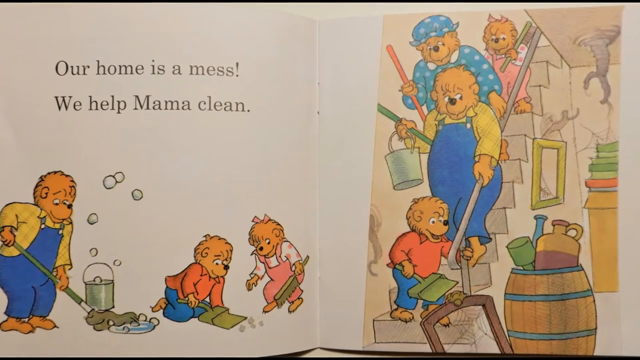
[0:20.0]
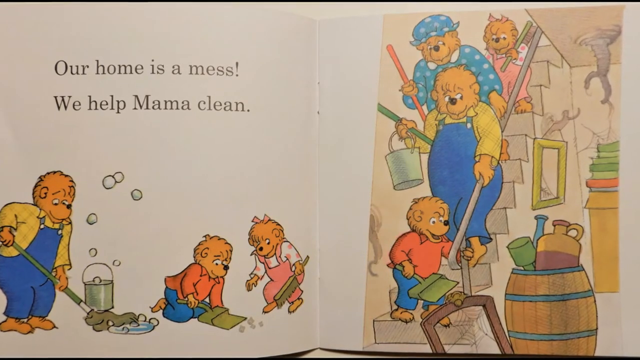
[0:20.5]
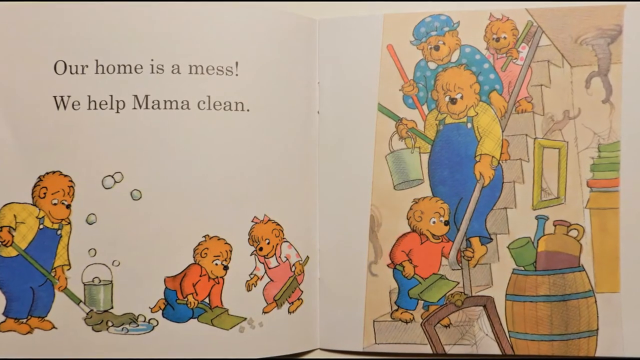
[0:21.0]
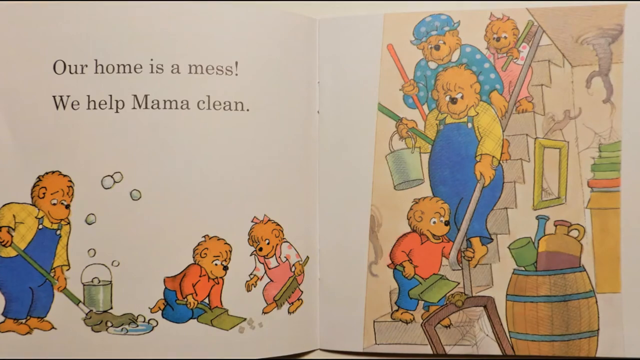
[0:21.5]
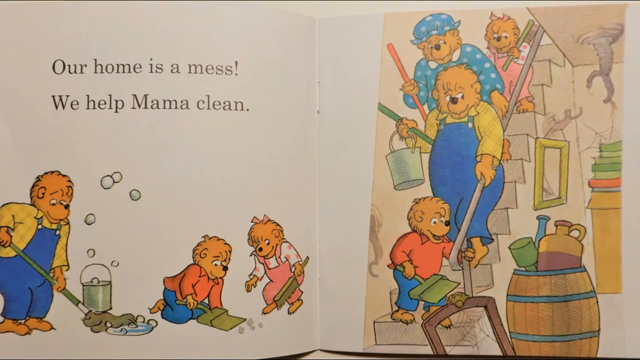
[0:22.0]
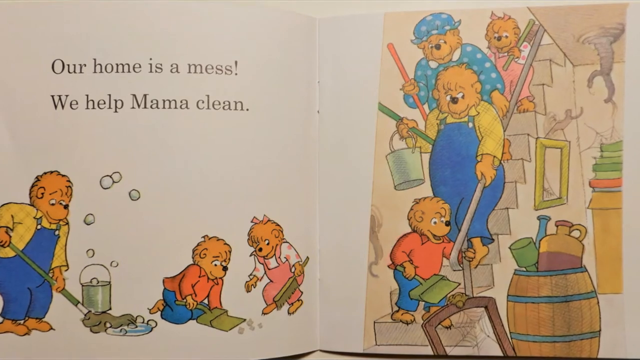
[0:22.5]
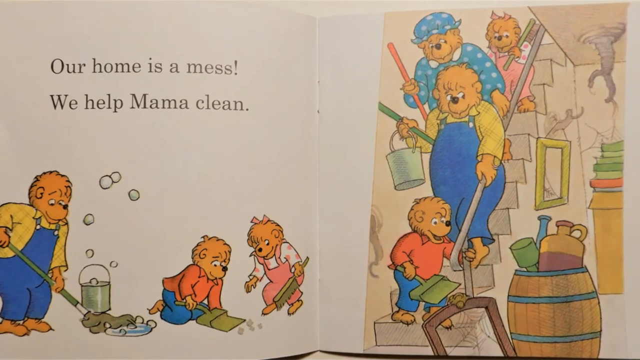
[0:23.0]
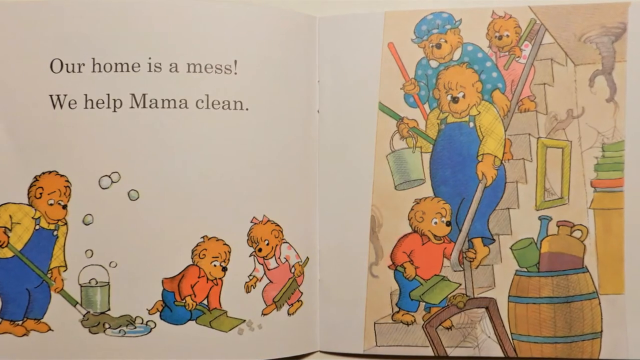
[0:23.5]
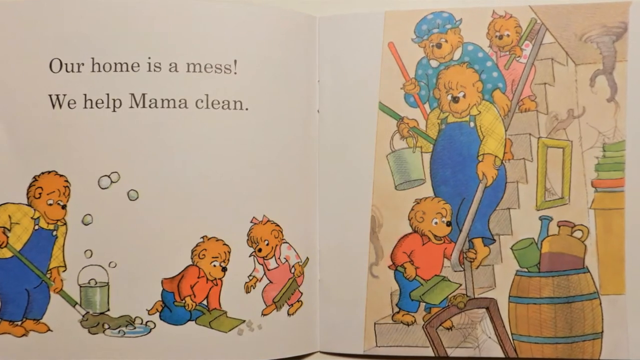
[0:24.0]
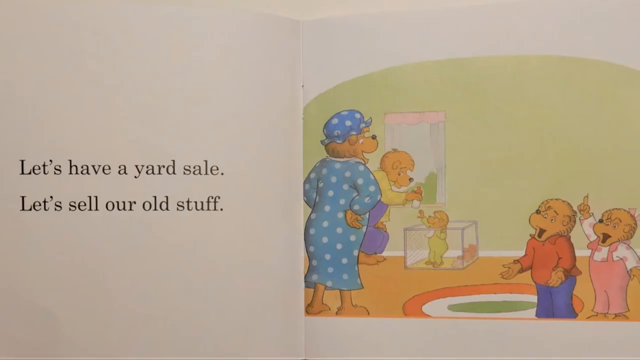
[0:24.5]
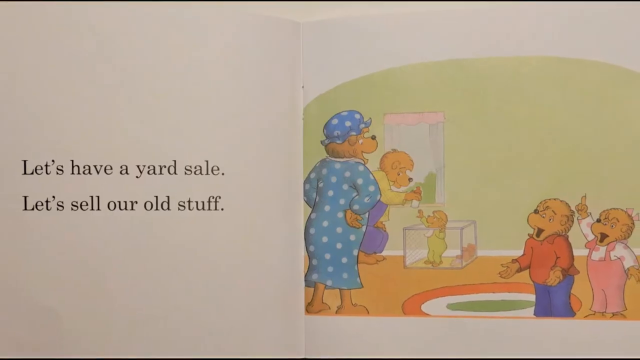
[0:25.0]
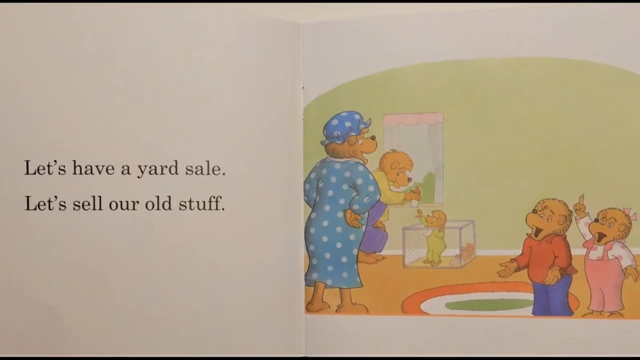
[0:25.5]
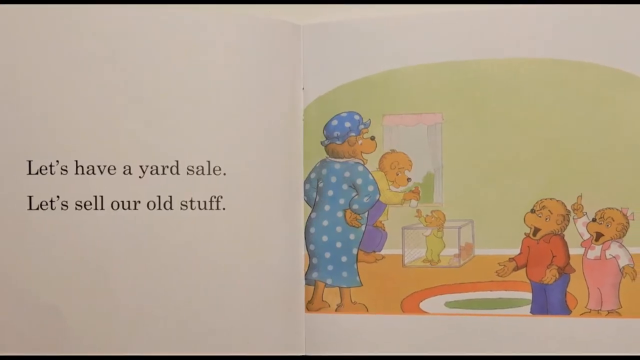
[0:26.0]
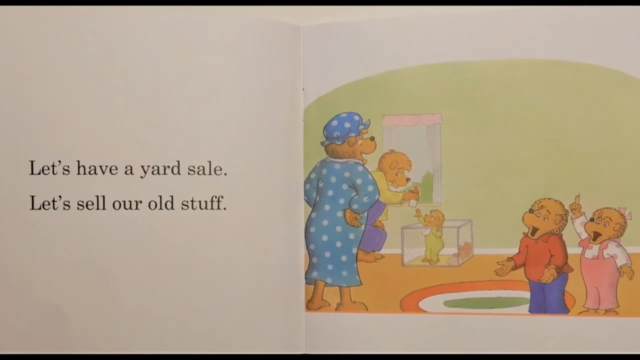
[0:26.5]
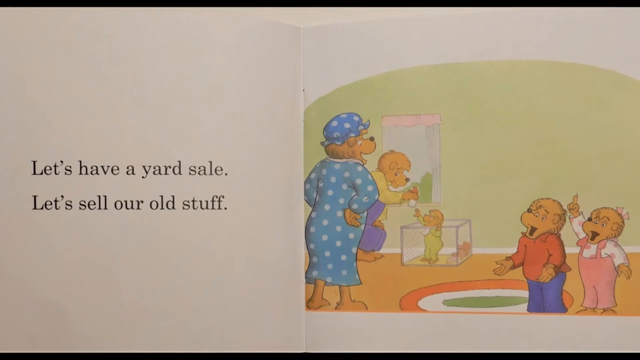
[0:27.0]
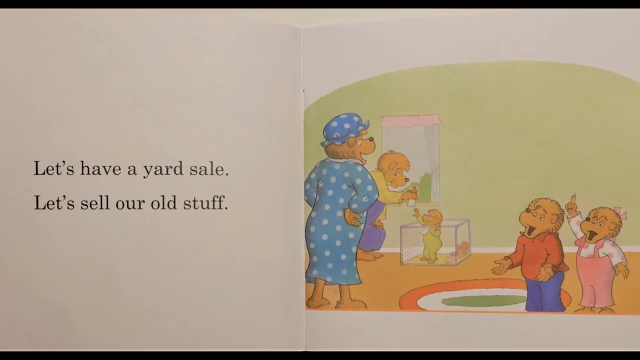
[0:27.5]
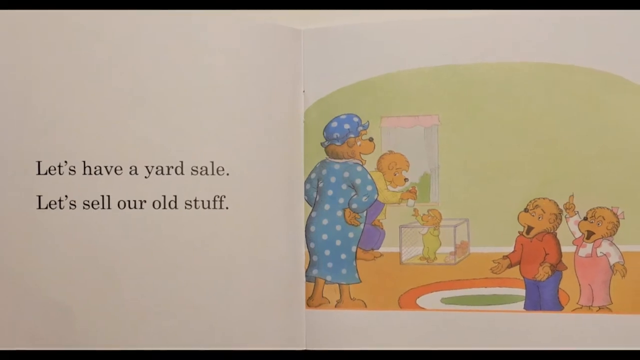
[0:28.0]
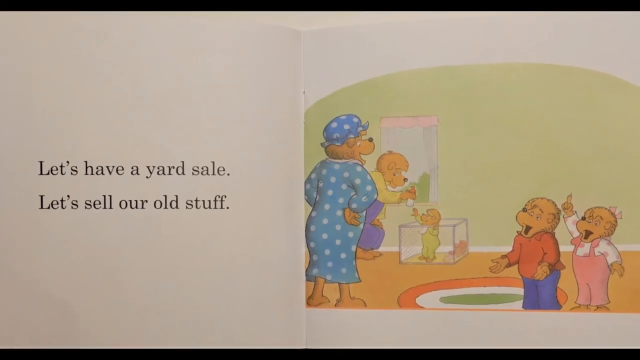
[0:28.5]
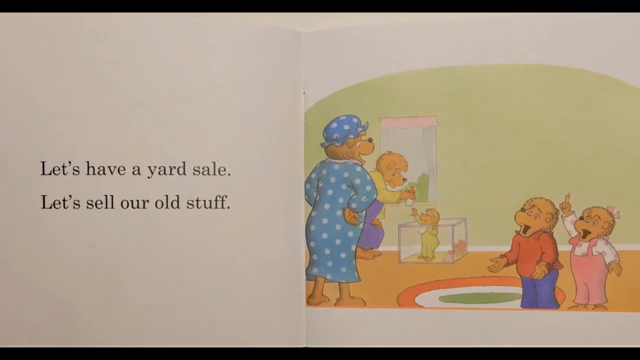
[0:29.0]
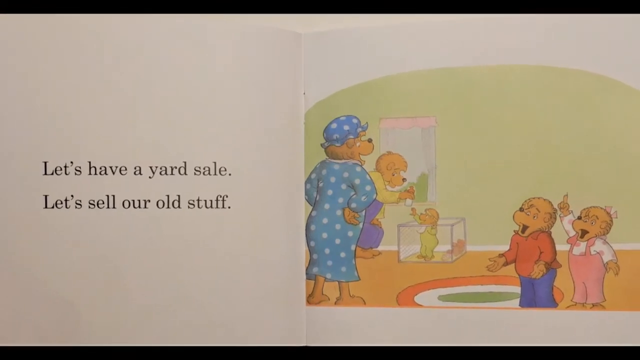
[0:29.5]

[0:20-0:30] The same two pages remain on screen as the camera slowly zooms in. About halfway through, the view switches to another page. There is some text on the left against a white background, and on the right the family is inside their living room, which looks rather empty. There is only a carpet and a fish tank with no fish in it. The baby is in the fish tank, reaching for its dad, who has the bottle of milk. The mother, the daughter and the son are also in the living room. The camera slowly zooms out toward the end.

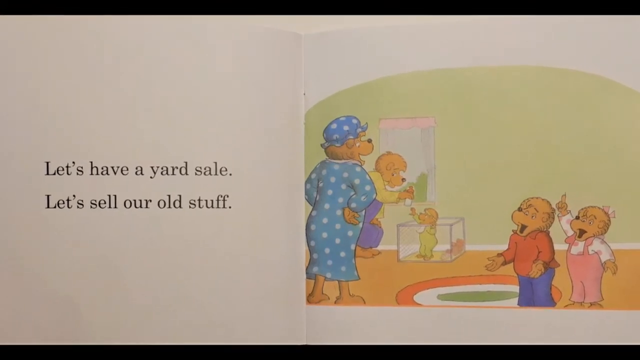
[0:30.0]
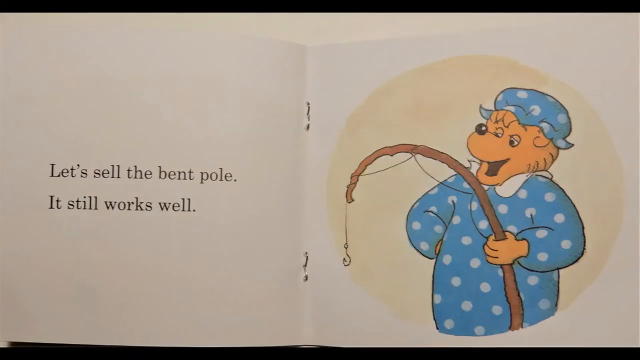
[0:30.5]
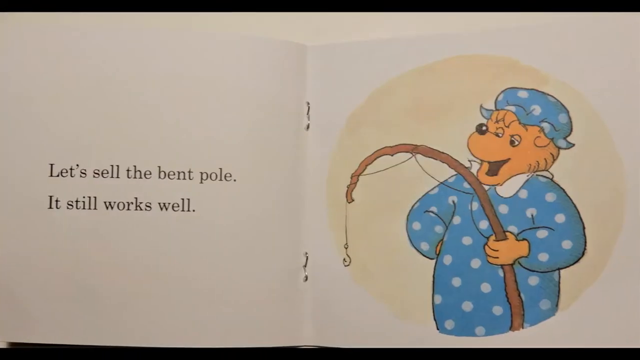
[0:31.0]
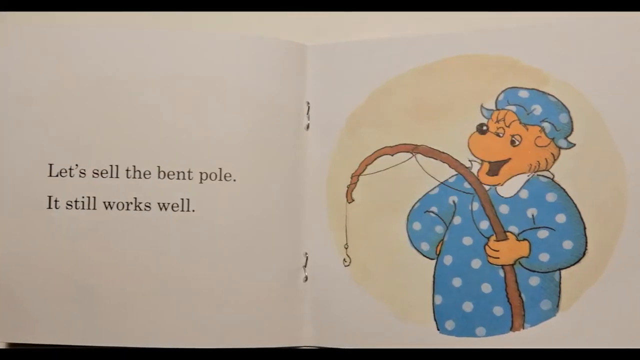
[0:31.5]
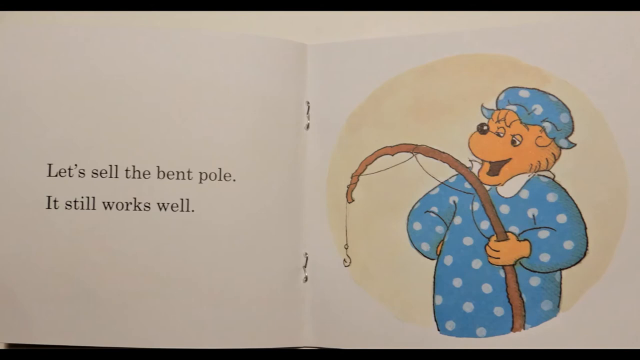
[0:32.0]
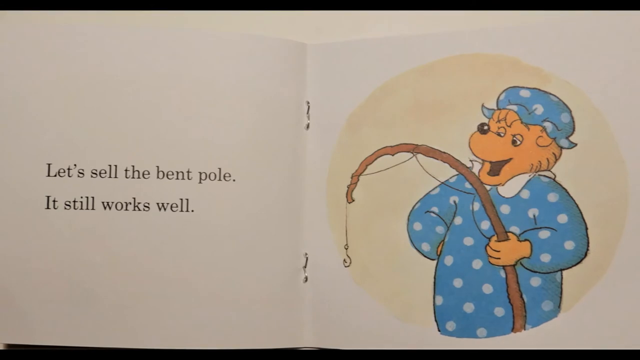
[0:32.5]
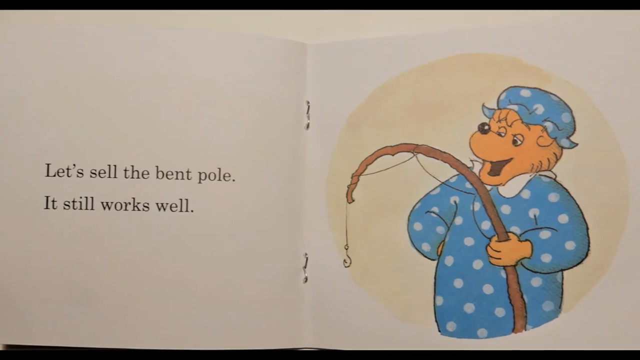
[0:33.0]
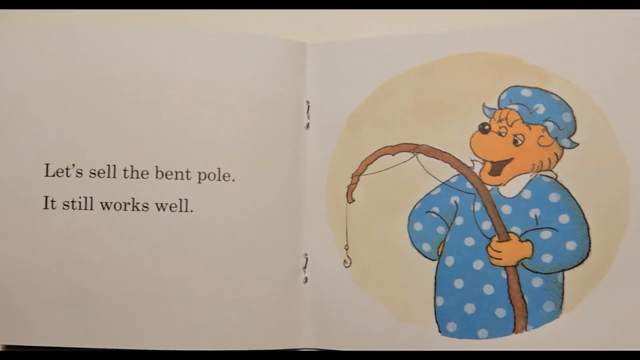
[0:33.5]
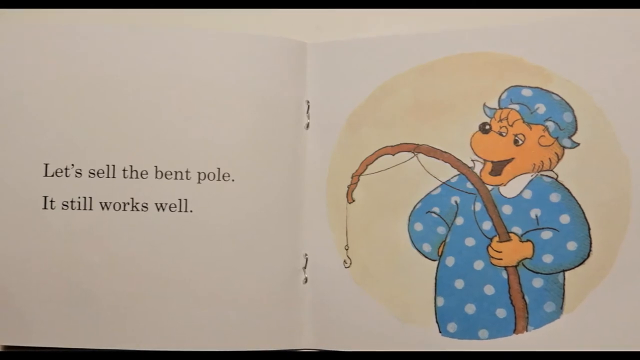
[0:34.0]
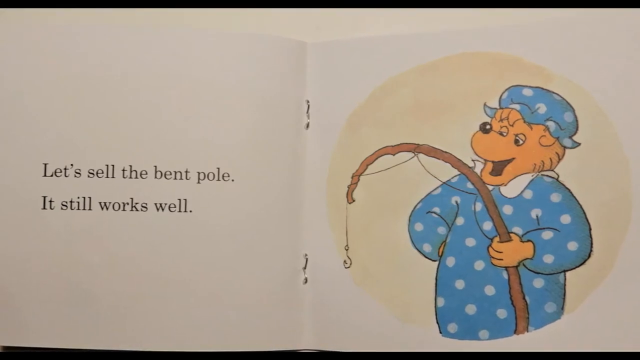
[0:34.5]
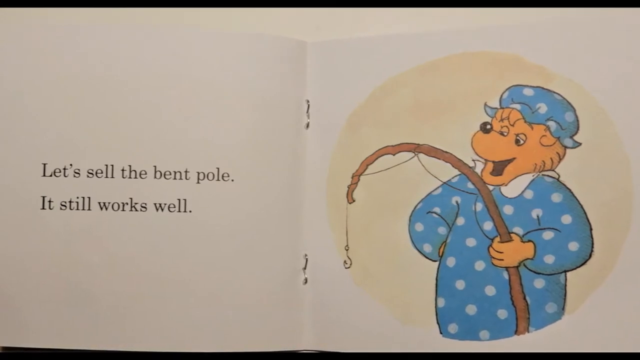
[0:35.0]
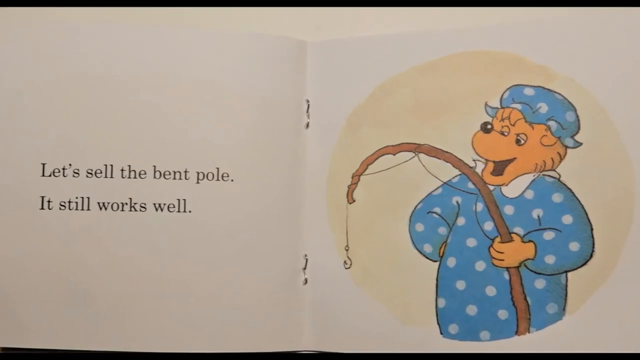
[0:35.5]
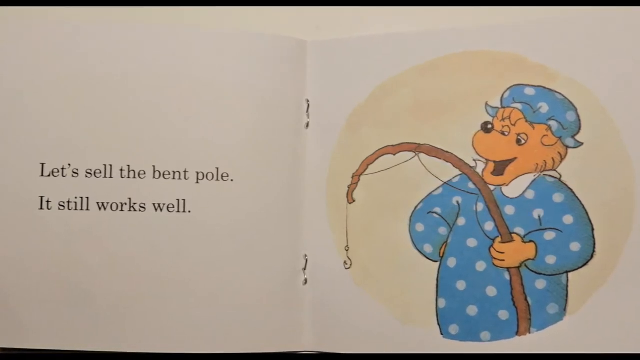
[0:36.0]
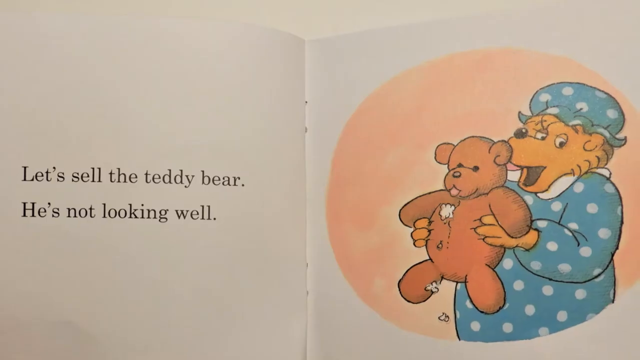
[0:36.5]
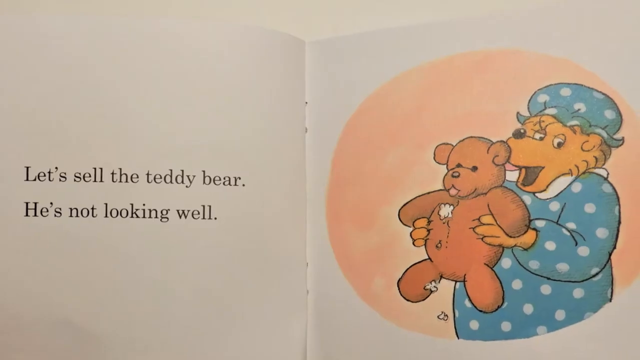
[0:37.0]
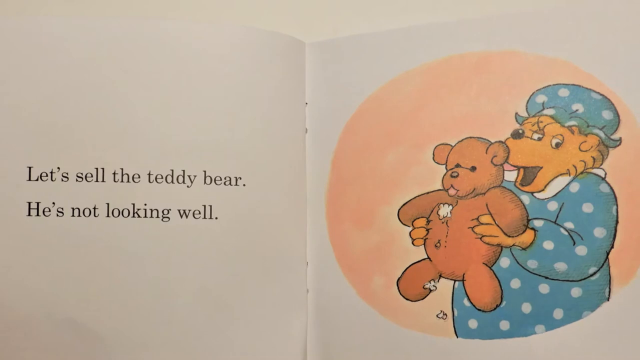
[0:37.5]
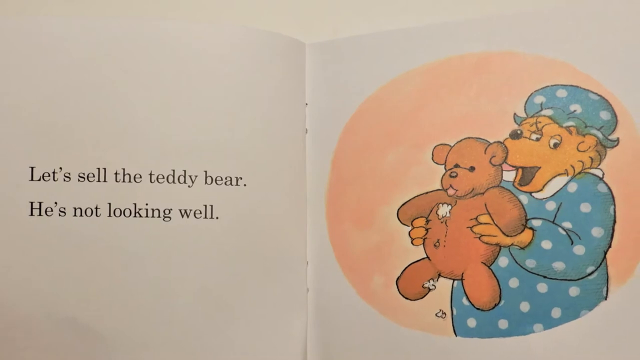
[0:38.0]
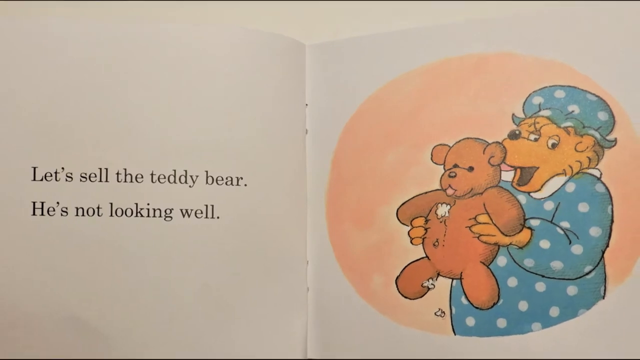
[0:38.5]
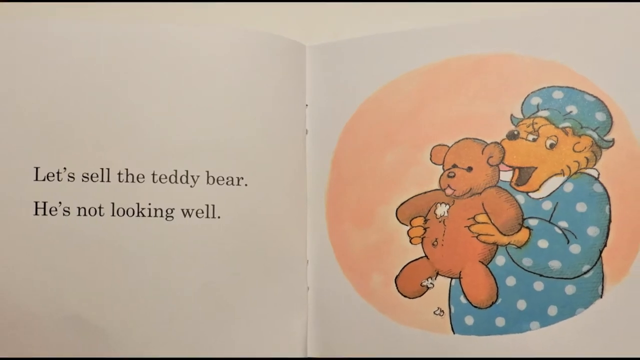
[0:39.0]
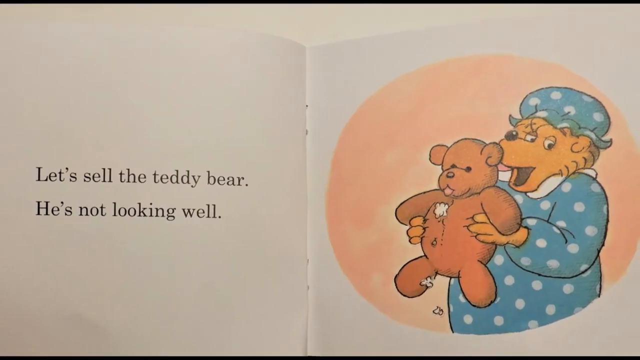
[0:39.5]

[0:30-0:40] Another page appears. The left side of the page is all white with some text on it. The right side is white except for a beige circle in the middle, inside which Mama Bear wears her blue outfit and blue hat. She holds some sort of stick with what looks like a fishing rod hook on the end and looks at it with her mouth open in awe. The camera very slowly zooms in until the view switches to another page: the left side is white with some black text on it, and the right side has an orange circle with Mama Bear inside holding a teddy bear that looks cut open a little, with some fluff falling out of it.